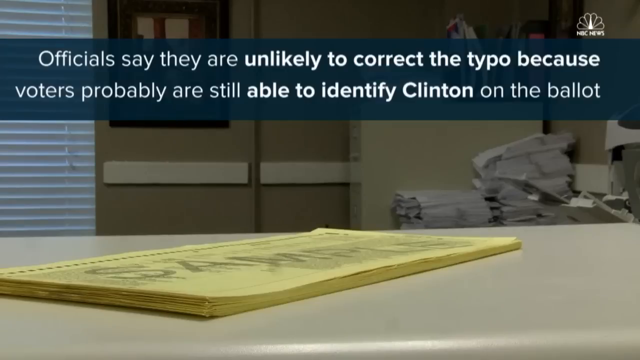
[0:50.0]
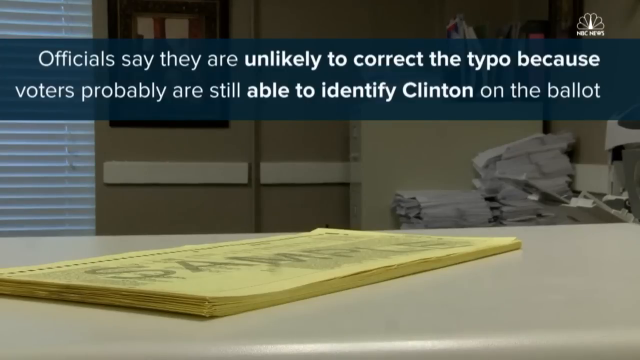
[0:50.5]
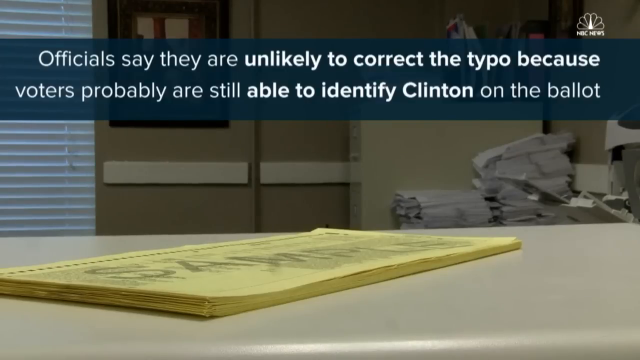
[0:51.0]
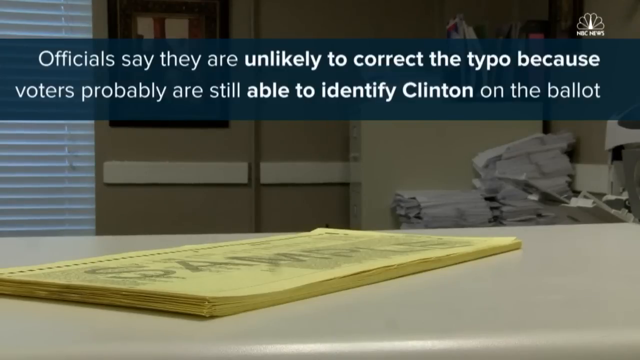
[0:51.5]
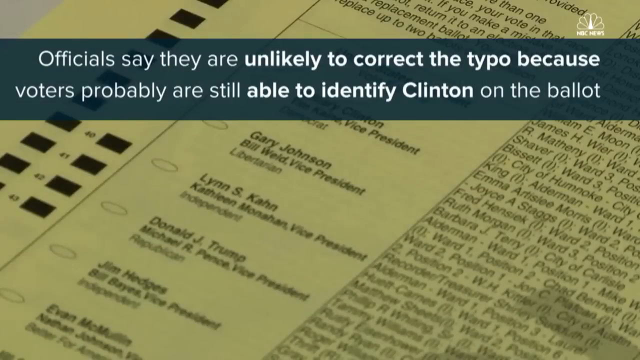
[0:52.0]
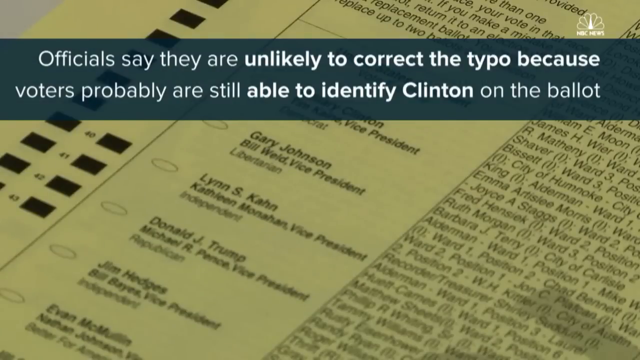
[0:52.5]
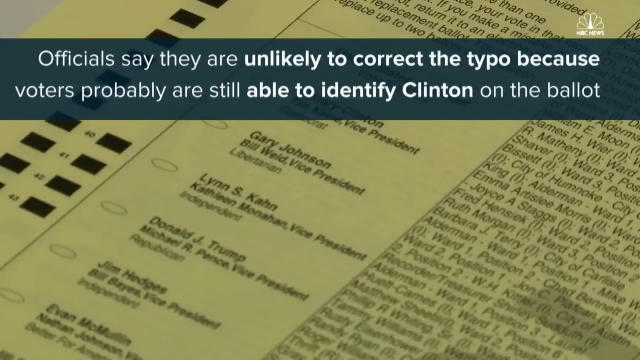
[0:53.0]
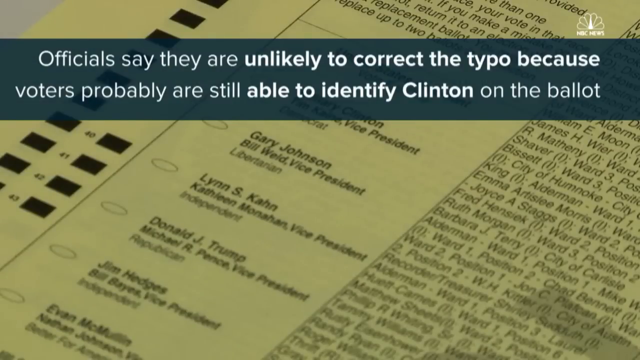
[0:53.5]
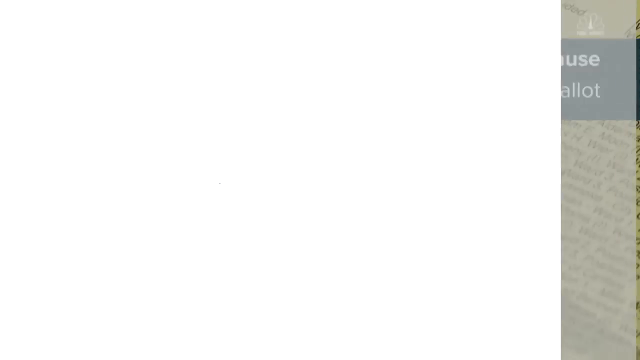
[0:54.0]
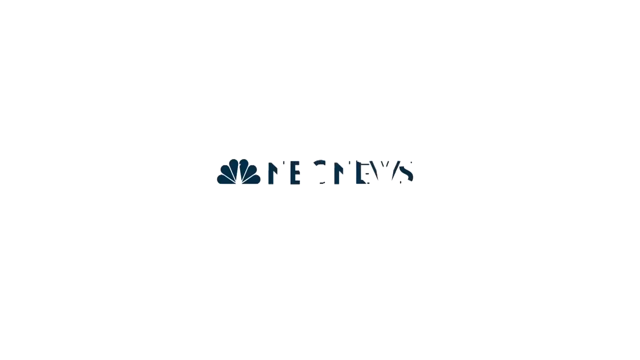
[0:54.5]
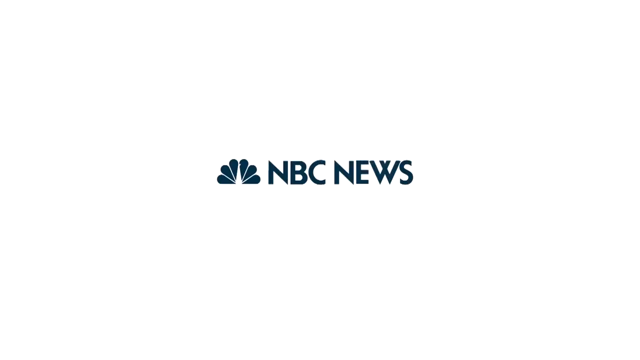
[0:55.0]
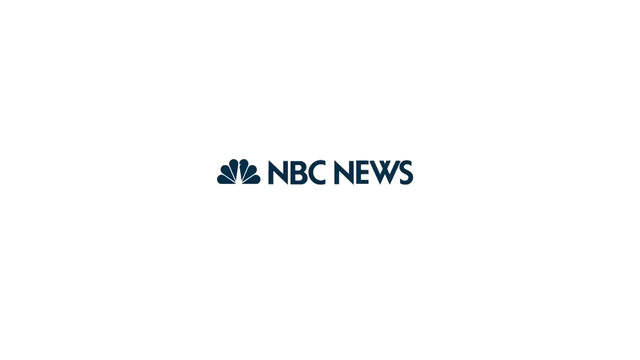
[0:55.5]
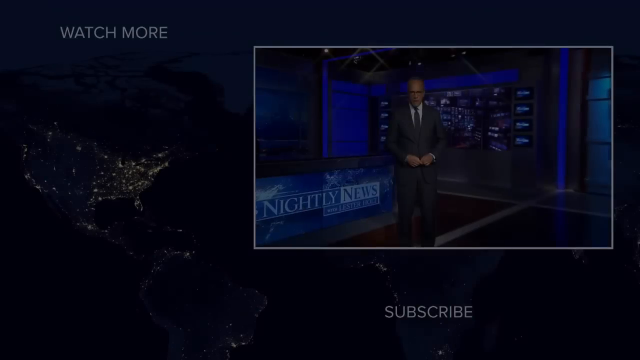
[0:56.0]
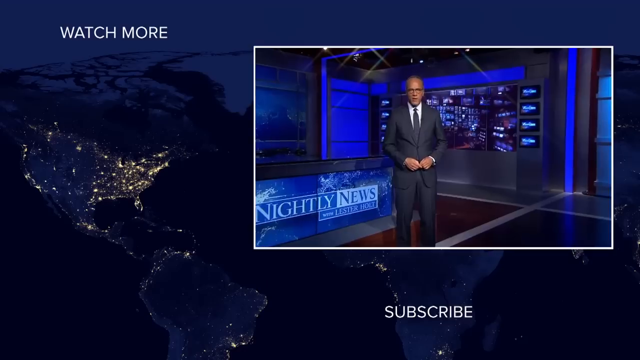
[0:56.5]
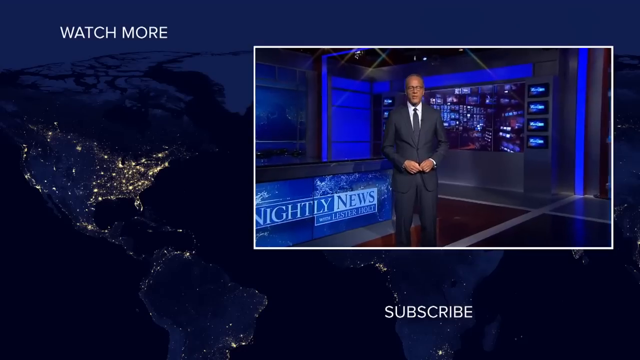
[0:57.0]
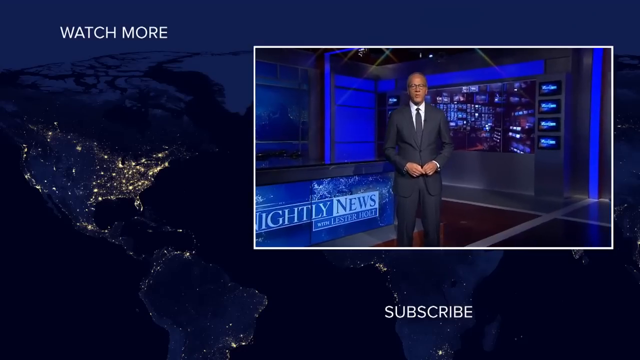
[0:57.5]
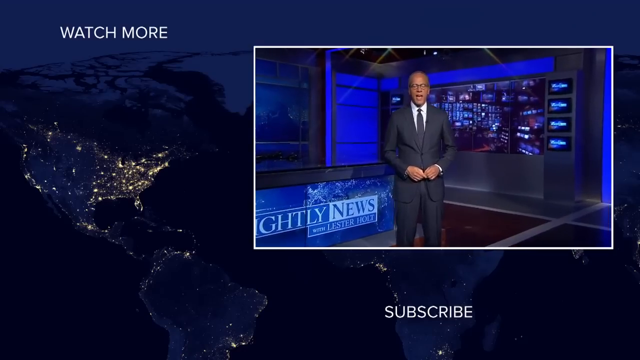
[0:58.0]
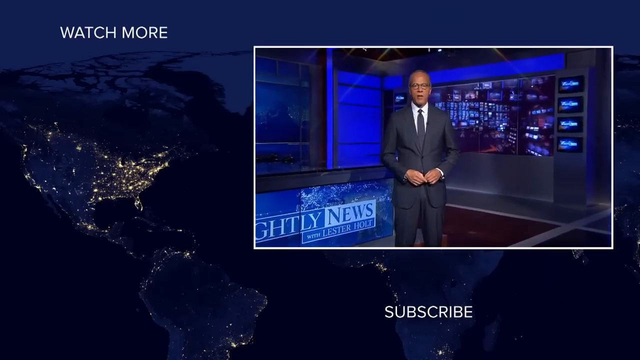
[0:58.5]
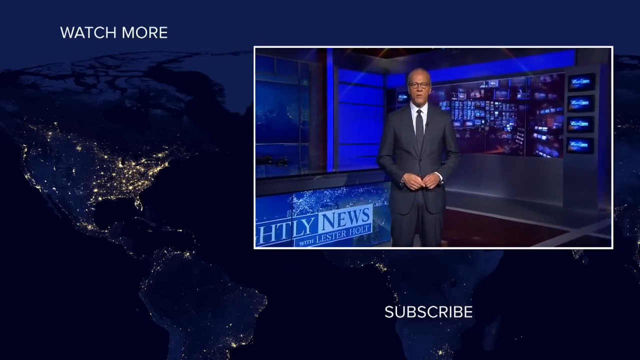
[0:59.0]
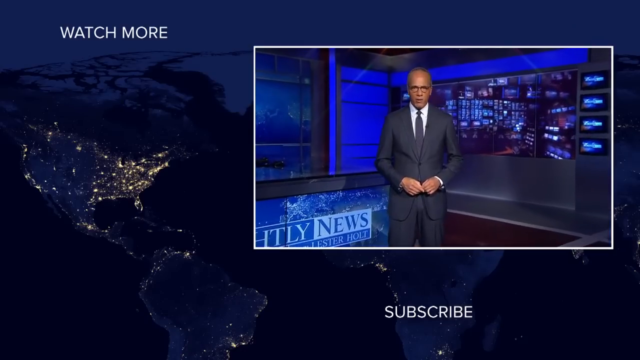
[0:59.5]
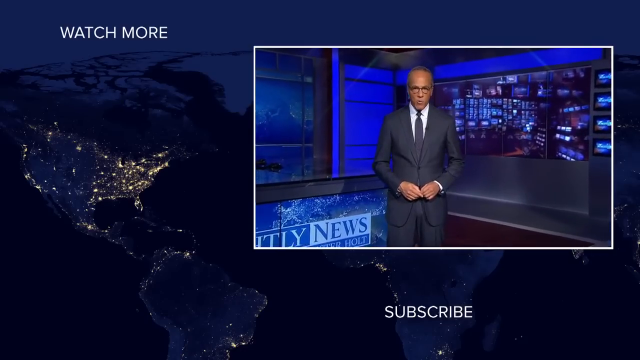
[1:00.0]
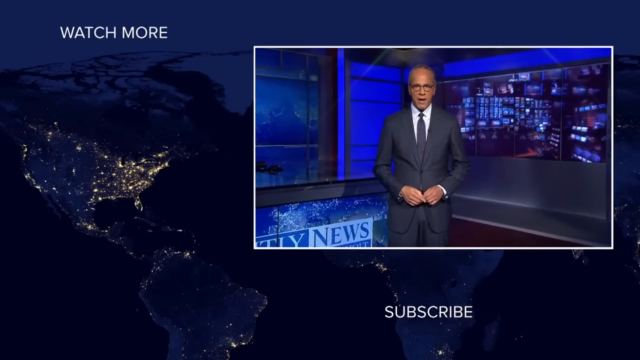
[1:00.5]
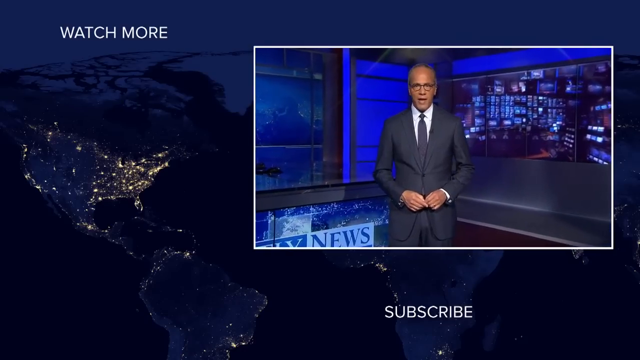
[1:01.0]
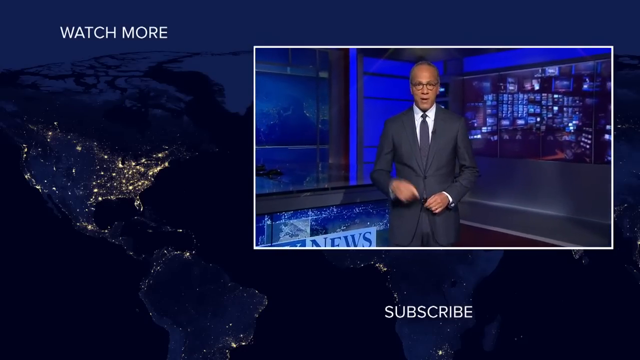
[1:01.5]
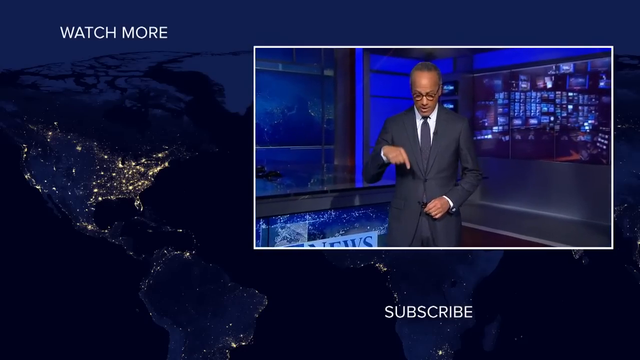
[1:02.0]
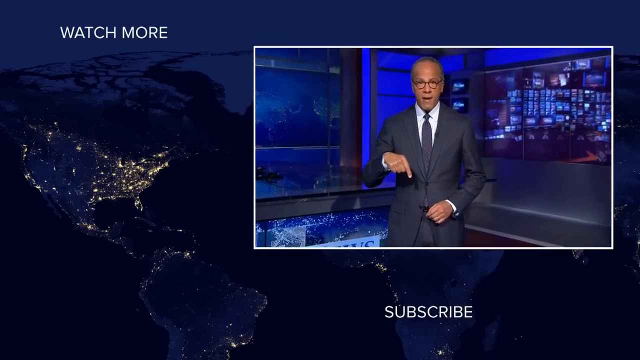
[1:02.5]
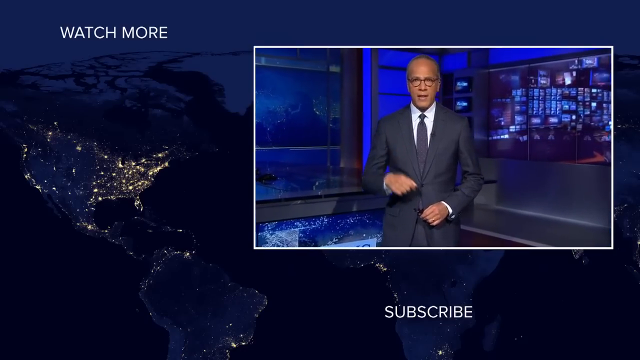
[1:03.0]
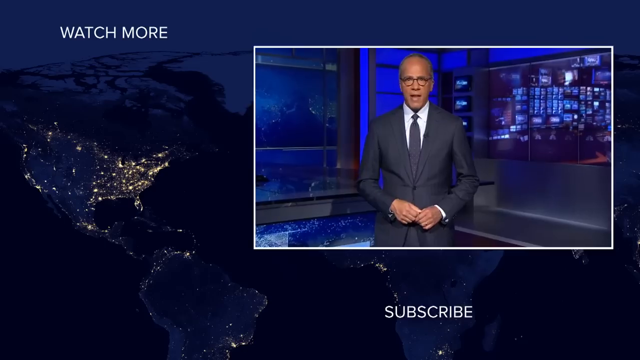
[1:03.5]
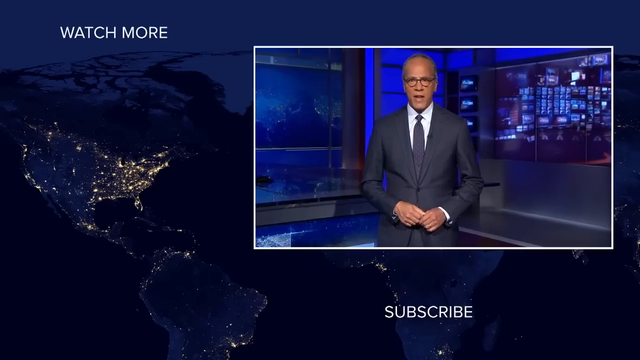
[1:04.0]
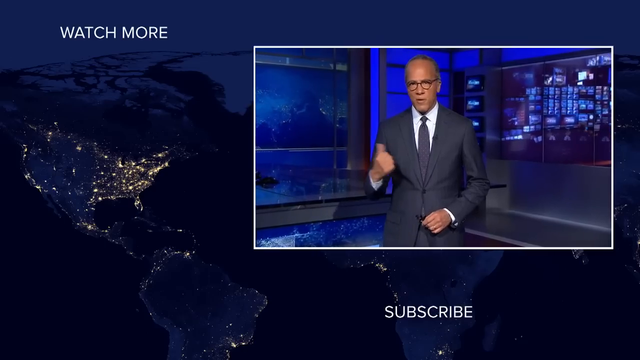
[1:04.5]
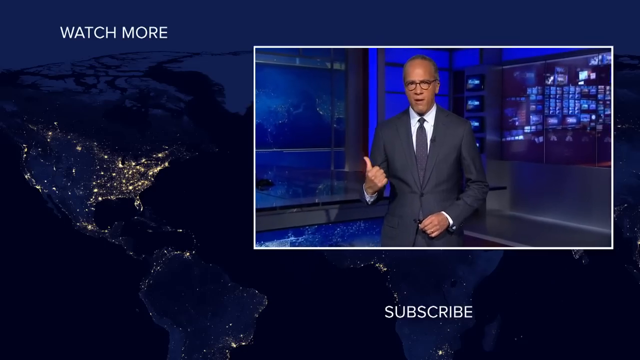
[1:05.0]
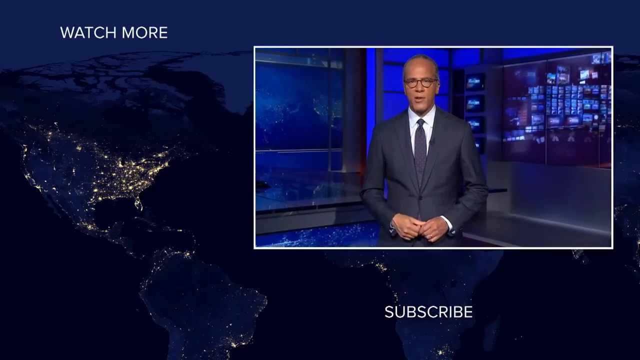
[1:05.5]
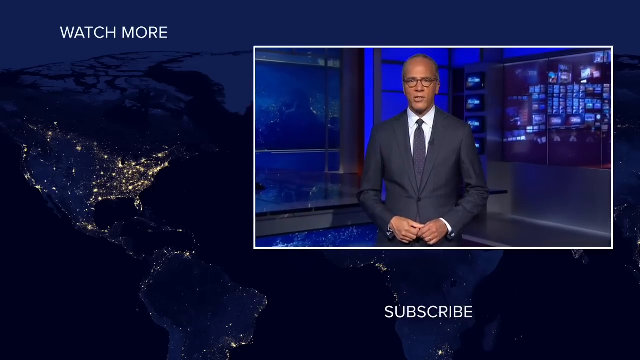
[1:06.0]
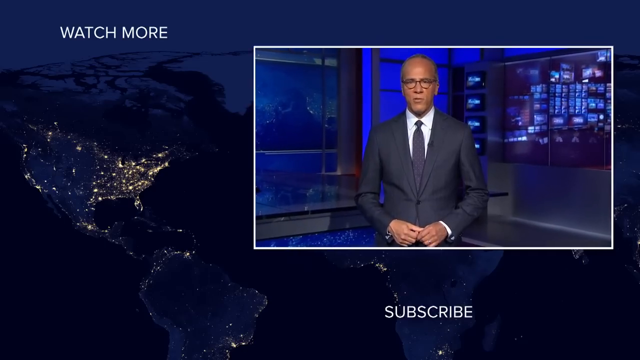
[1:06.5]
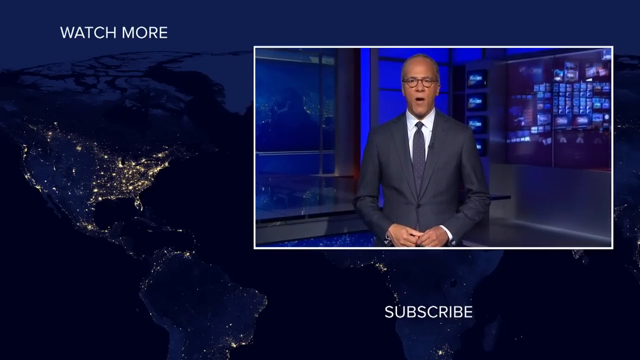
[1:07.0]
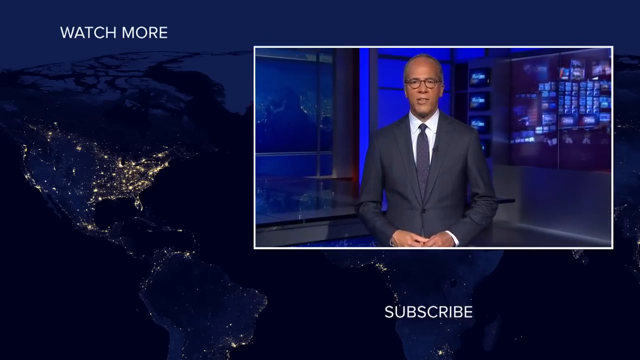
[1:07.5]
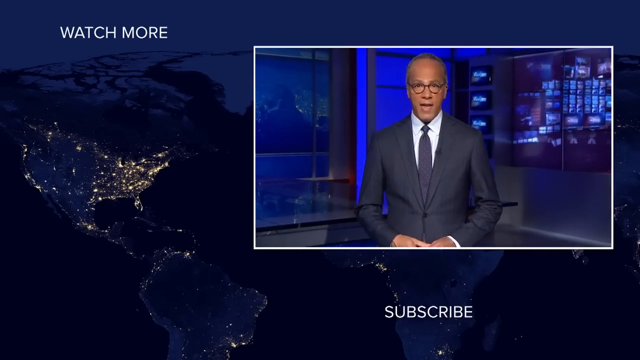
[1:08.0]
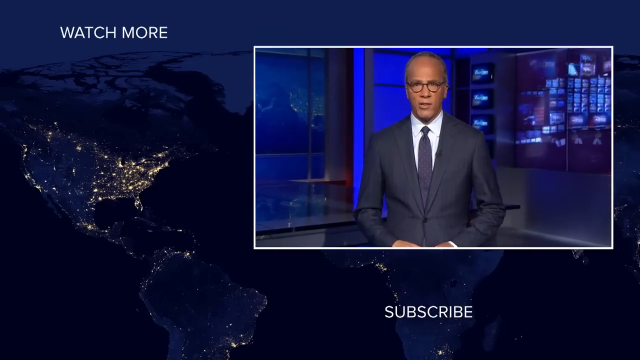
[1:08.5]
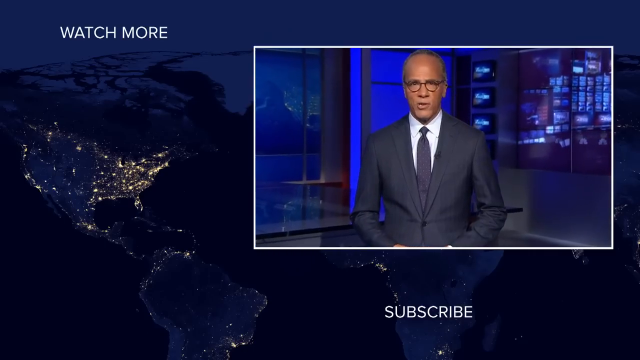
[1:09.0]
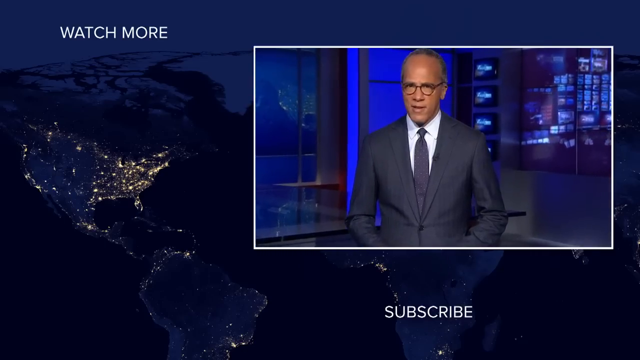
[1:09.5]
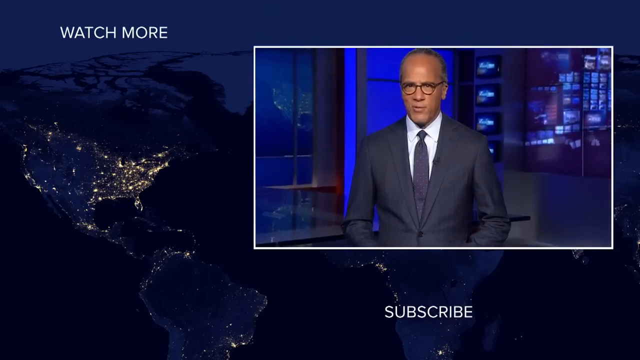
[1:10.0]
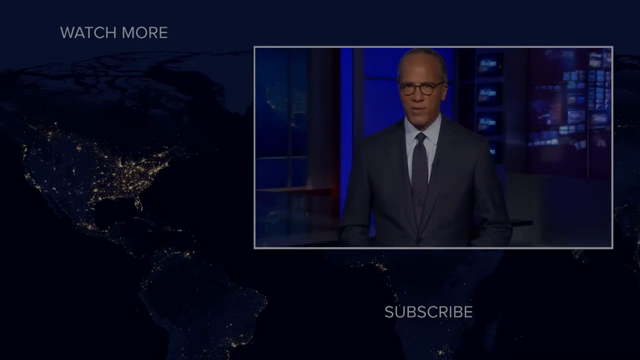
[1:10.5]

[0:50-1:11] A banner headline reads "Officials say they are unlikely to correct the typo because voters probably are still able to identify Clinton on the ballot," with a view of the misspelled ballot paper behind it. Text on screen says "NBC Nightly News." The video cuts to a newscaster presenting the news in the studio. A picture-in-picture box is on the right-hand side of the screen, over a backdrop showing the United States from space at nighttime, with the lights of towns lit up. The newscaster is a tall, balding man wearing glasses, a suit and tie, and a white shirt. He is standing in front of the studio, with screens behind him that make up the studio.